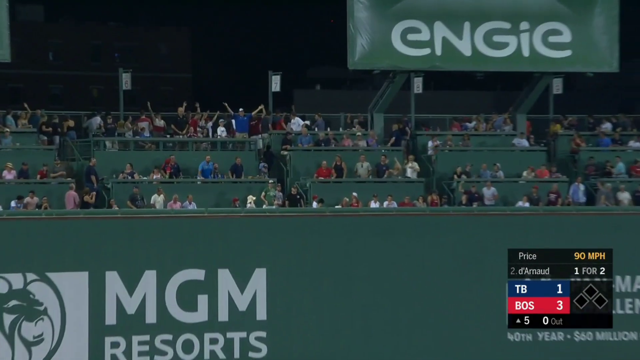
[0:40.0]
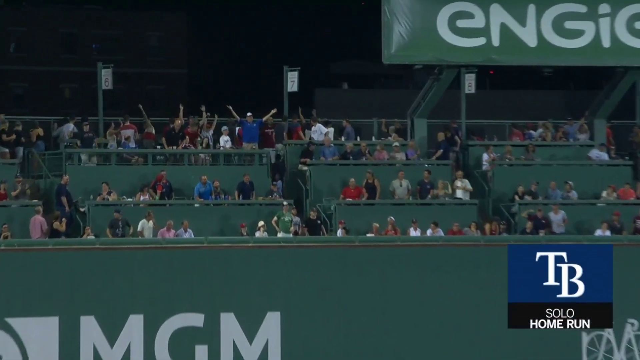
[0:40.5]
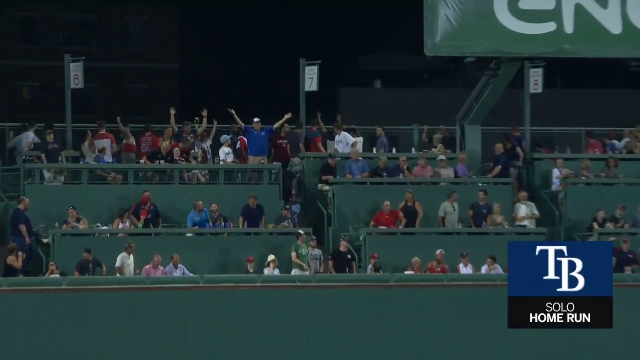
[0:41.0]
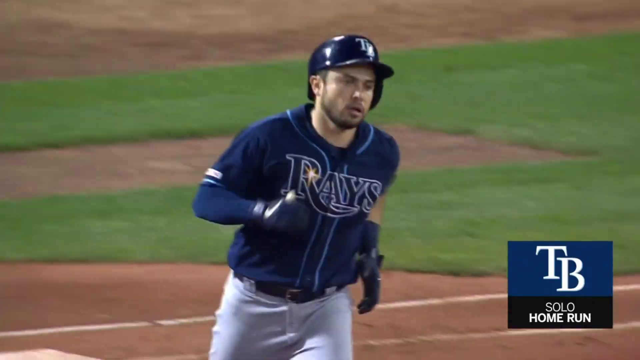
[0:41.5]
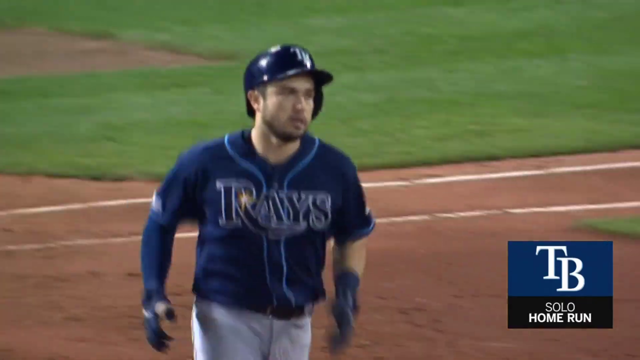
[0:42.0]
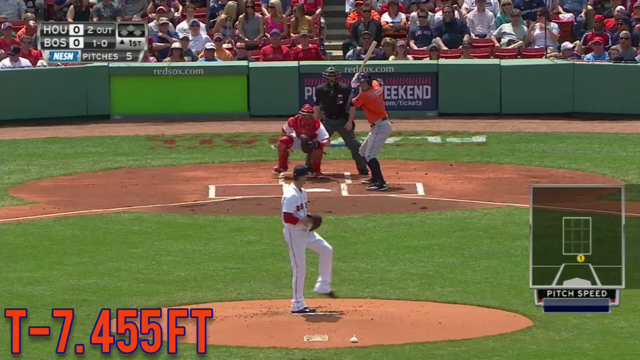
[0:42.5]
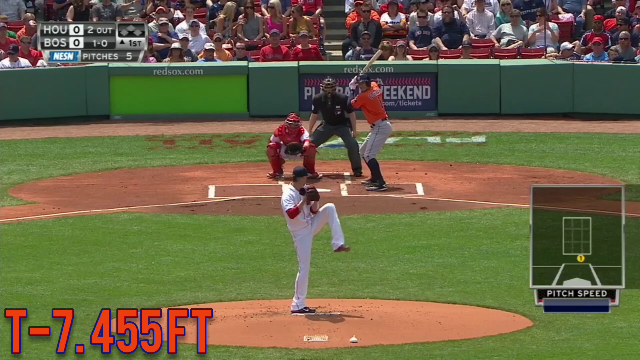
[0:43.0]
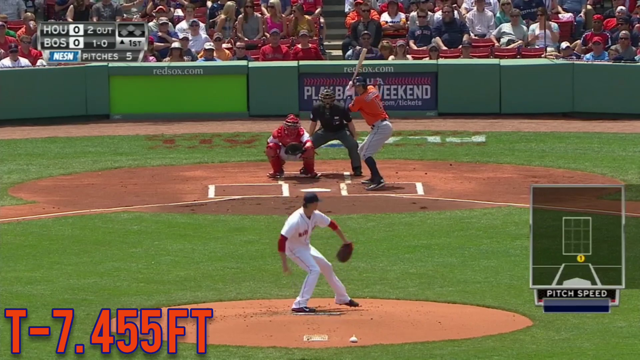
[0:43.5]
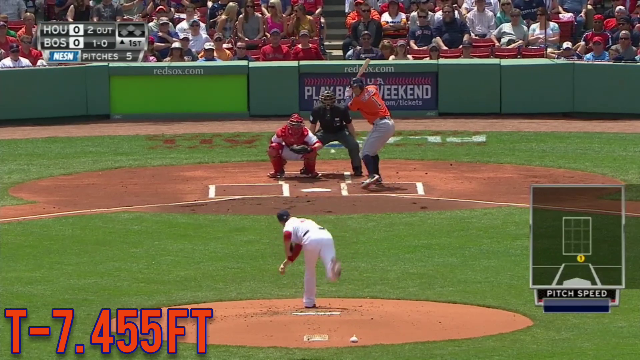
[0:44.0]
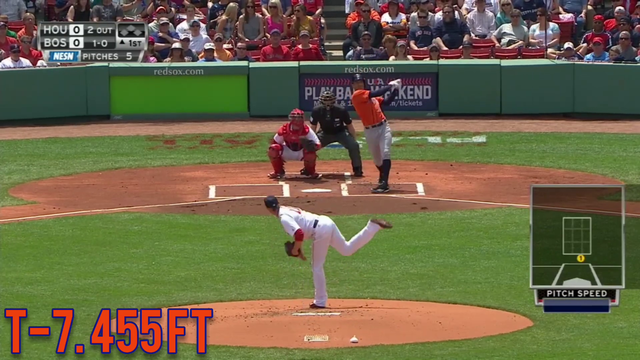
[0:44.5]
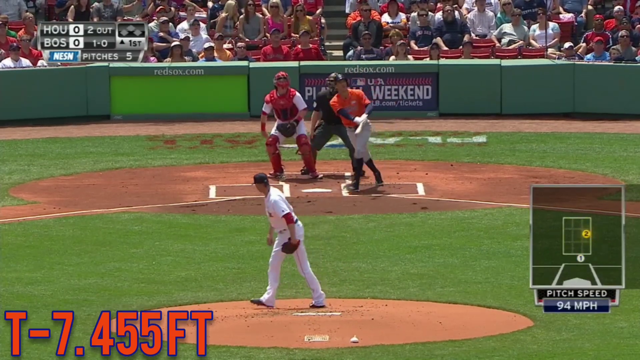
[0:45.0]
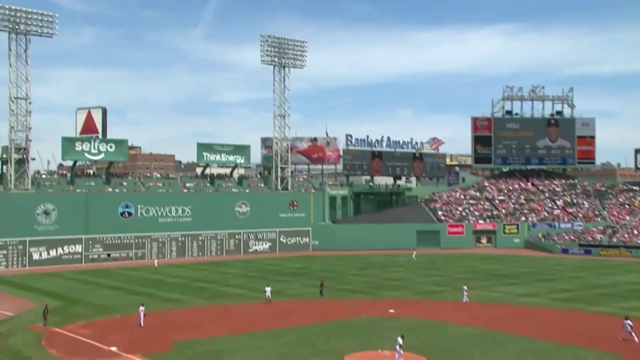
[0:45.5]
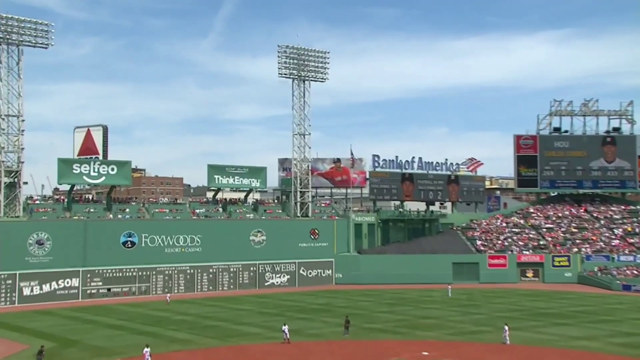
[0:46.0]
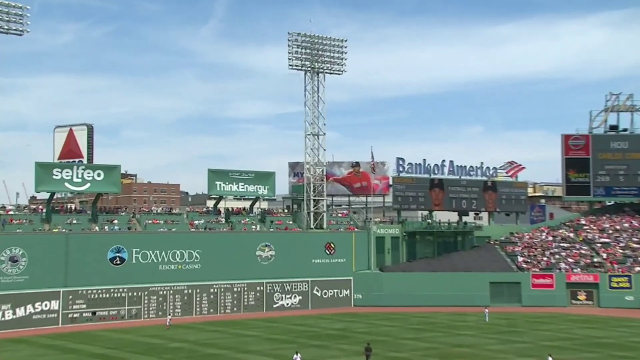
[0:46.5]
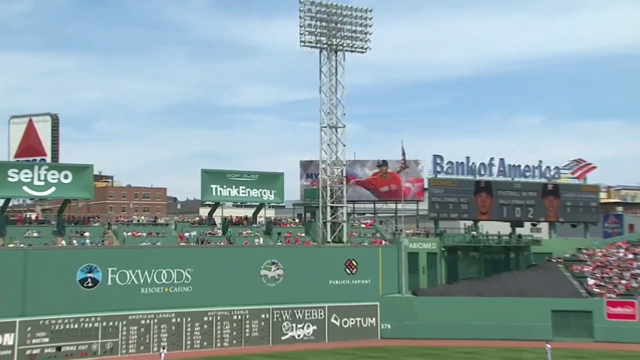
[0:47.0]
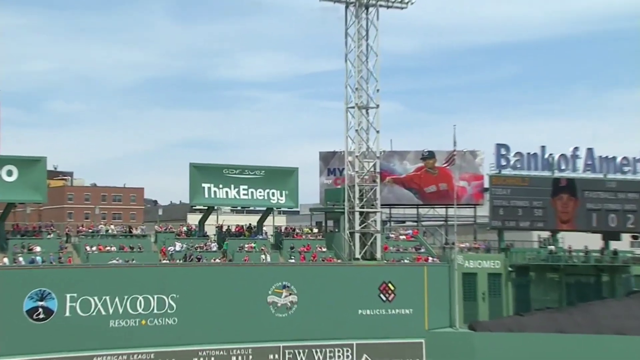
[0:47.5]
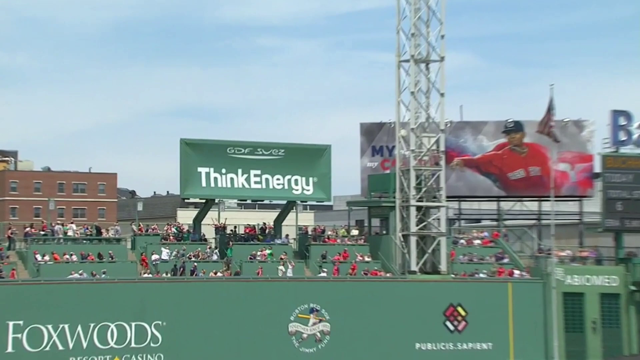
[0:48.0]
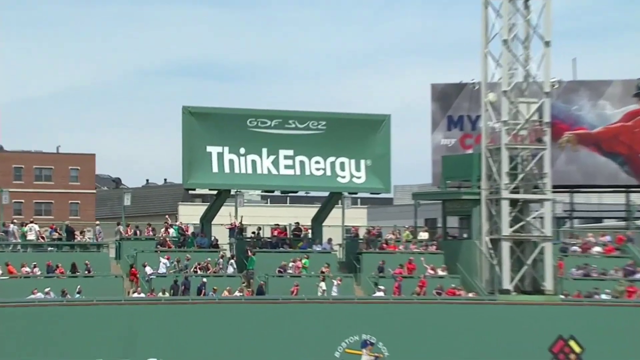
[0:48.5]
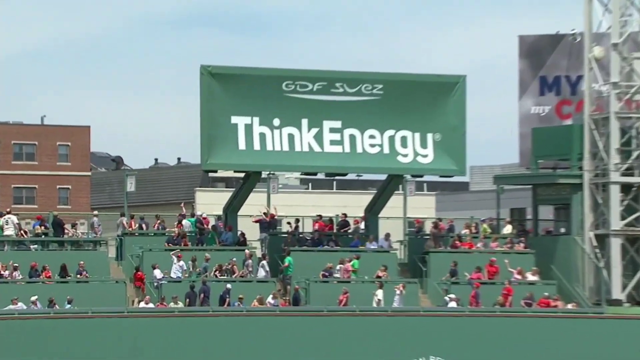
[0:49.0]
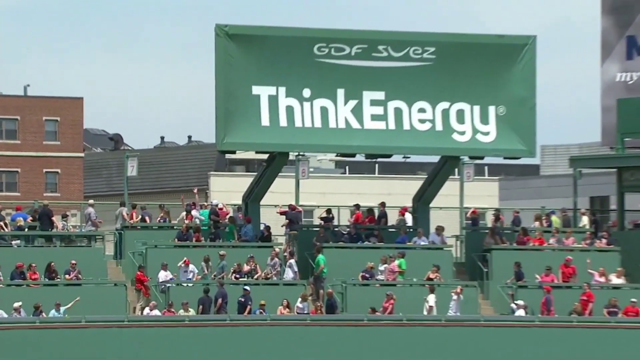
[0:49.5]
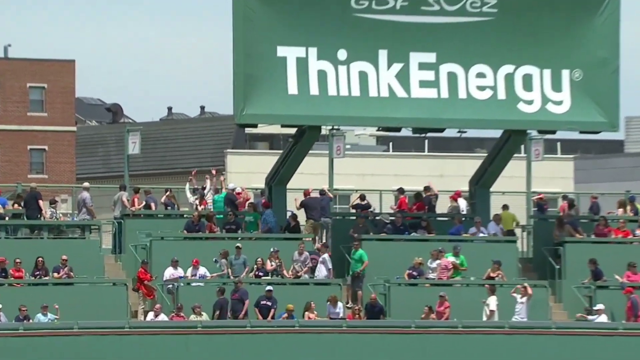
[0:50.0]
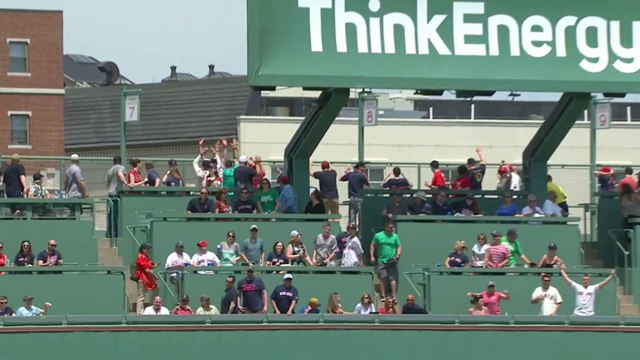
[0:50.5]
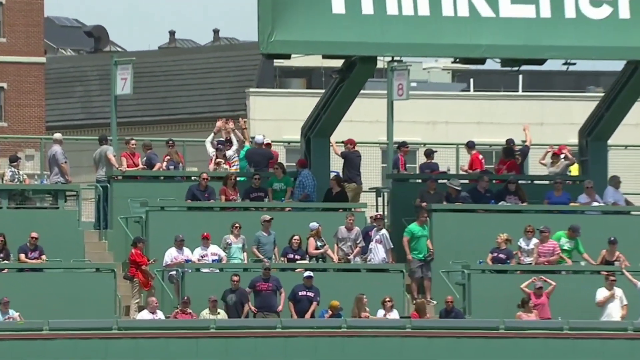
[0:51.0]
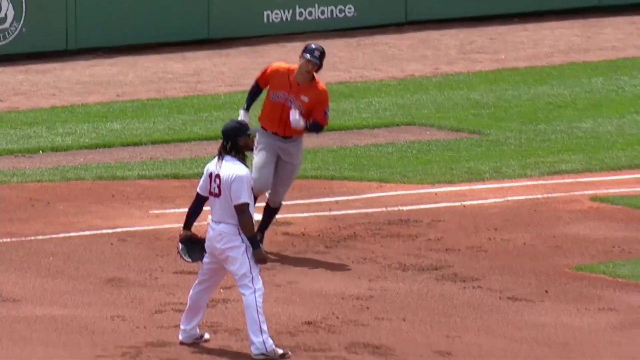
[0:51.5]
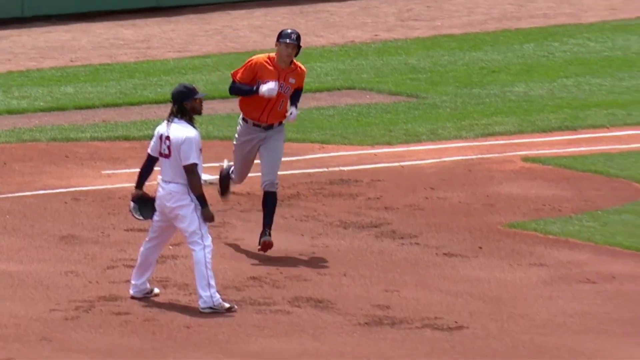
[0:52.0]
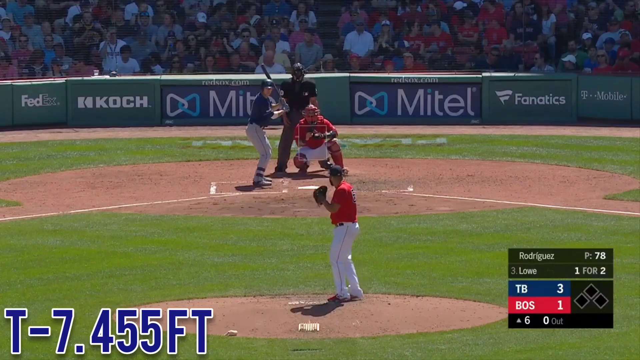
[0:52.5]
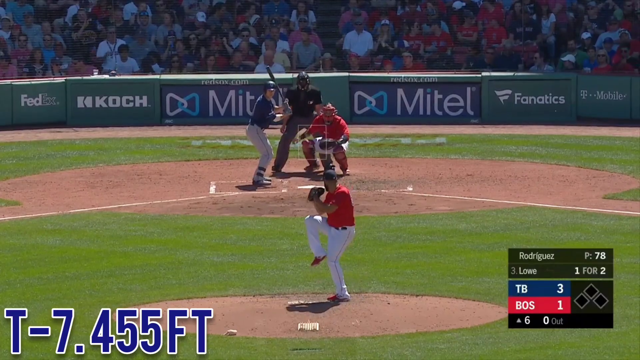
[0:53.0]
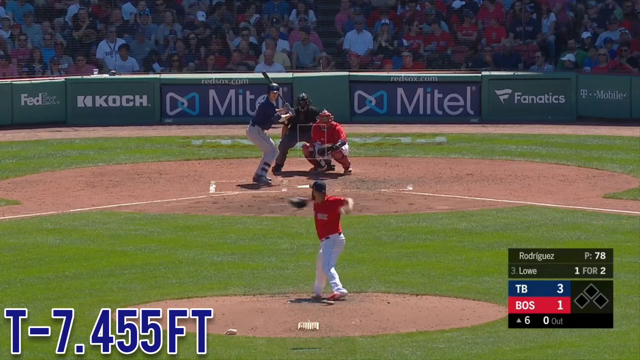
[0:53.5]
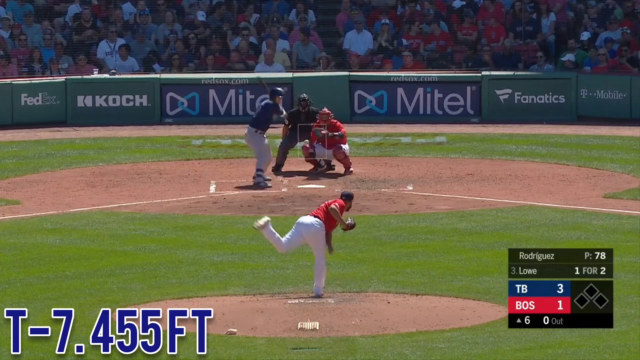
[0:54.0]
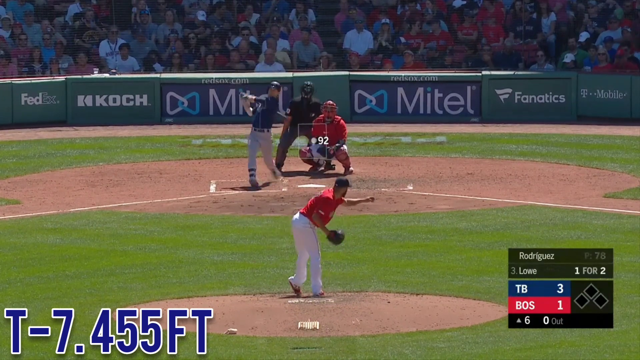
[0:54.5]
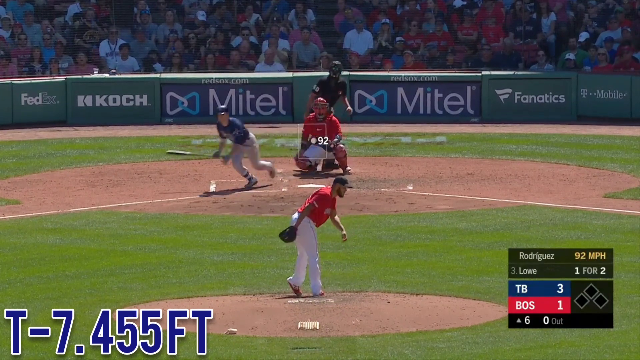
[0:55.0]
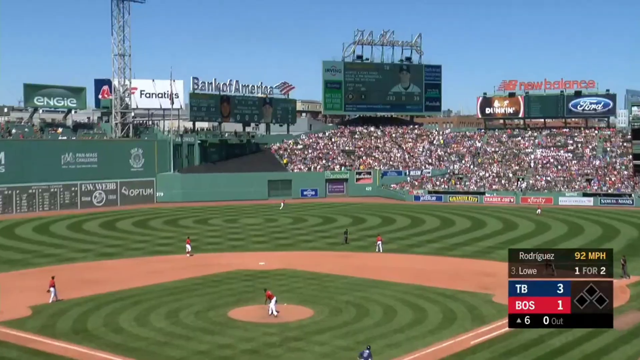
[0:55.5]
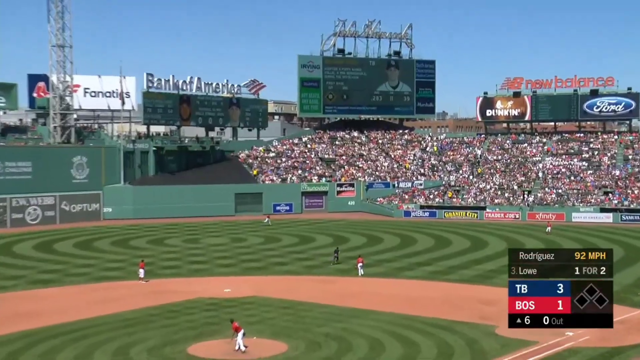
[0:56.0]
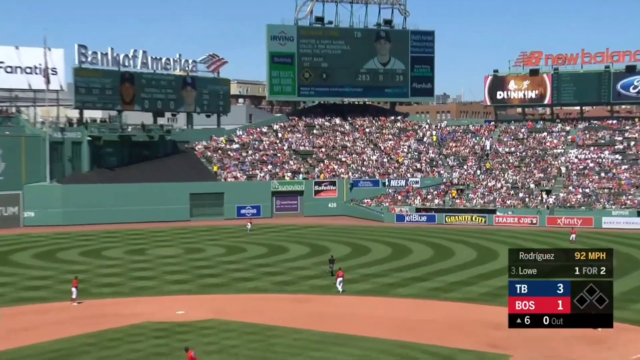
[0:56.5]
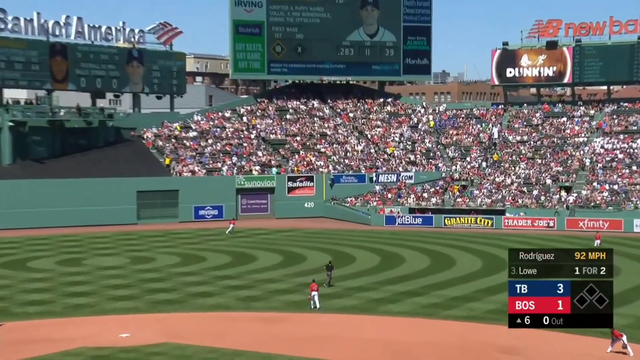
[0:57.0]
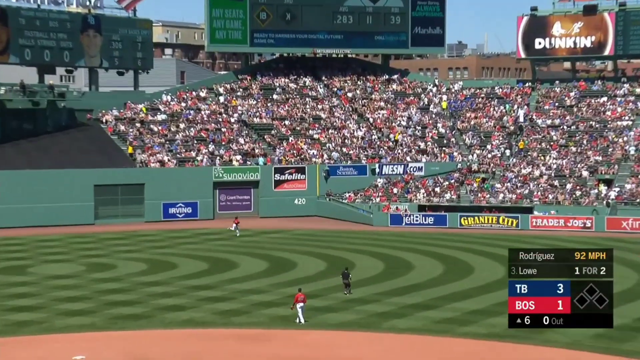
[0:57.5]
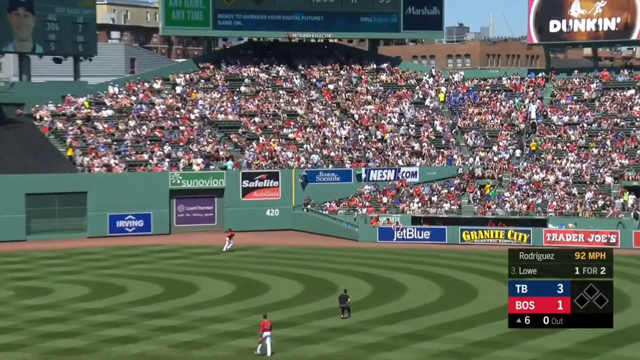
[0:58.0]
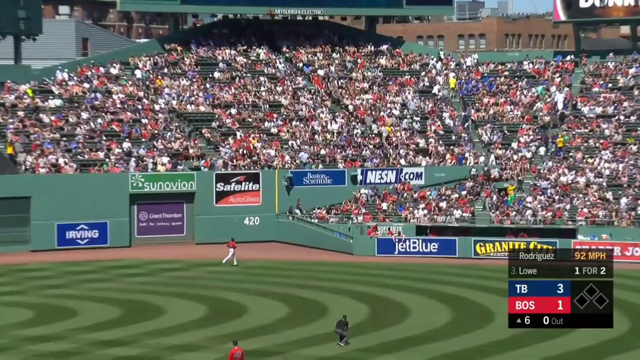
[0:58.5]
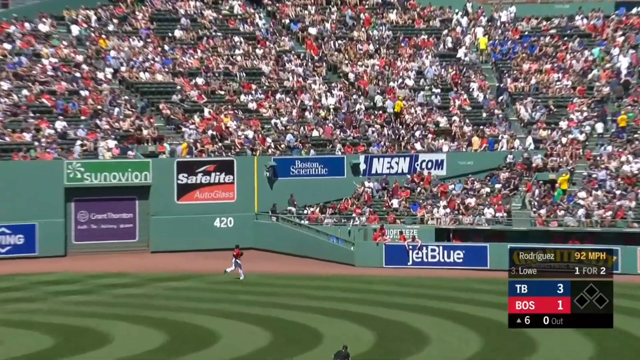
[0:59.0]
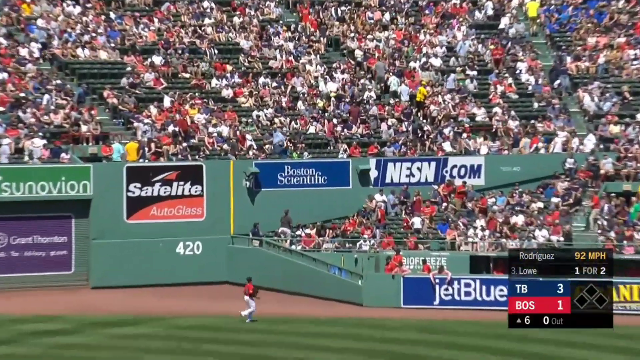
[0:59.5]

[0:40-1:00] The Tampa Bay solo home run finishes, and the scene changes. A player for another team hits the ball deep into left center field, over the Green Monster, and again the left fielder does not bother to chase it. It falls into the seats under a sign way back in left center field; fans are not able to chase it because it has cleared the entire stadium. A blue and white legend in the lower left of the screen shows the home run traveled 455 feet. The scene changes to Tampa Bay at Boston in the top of the sixth, with Tampa Bay leading 3-1. The Boston left-hander delivers with a three-quarter motion, a fastball clocked at 92 mph, which is hit to dead center field over the 420 sign for a Tampa Bay home run. The batter is D'Arnaud, who was 1-for-2 in the game before this home run.